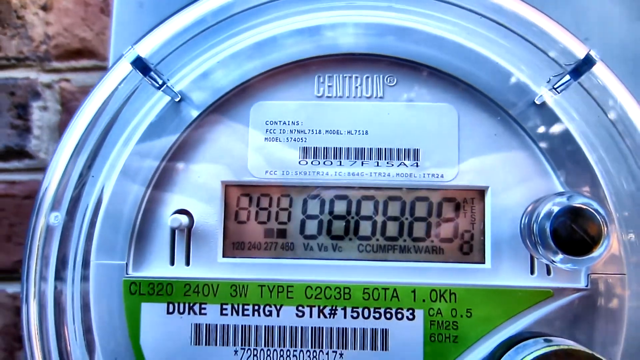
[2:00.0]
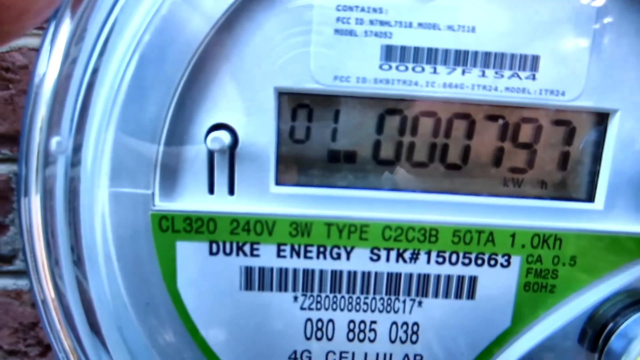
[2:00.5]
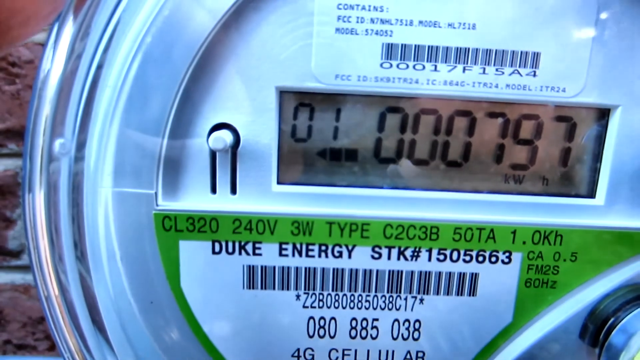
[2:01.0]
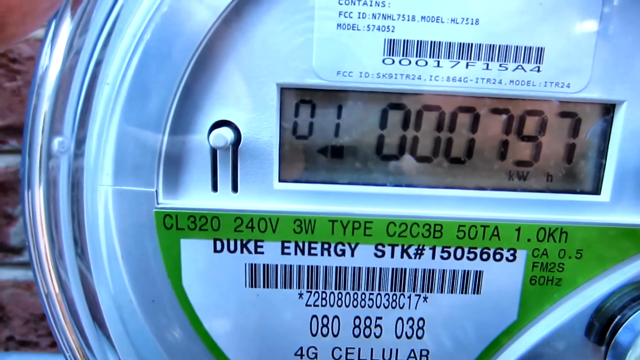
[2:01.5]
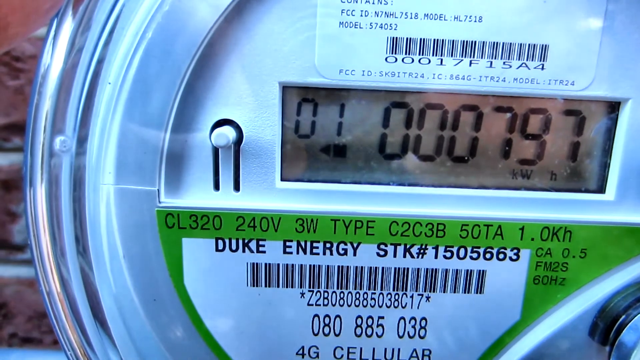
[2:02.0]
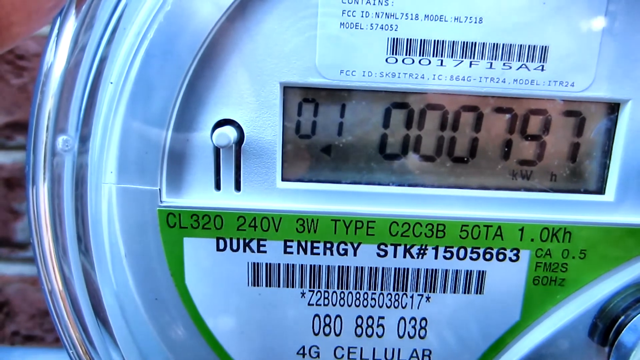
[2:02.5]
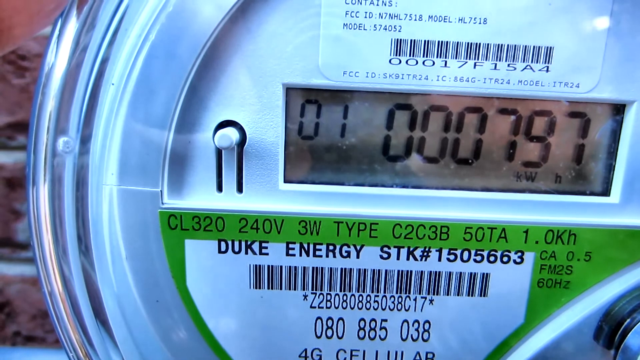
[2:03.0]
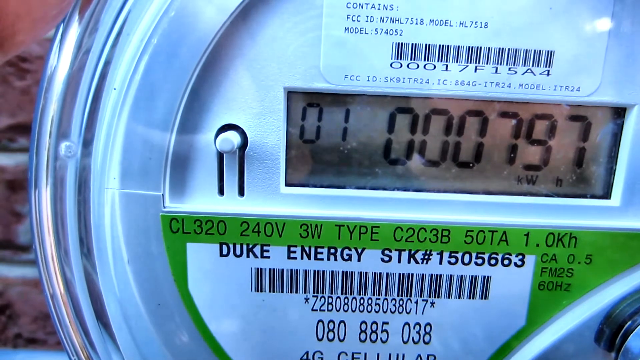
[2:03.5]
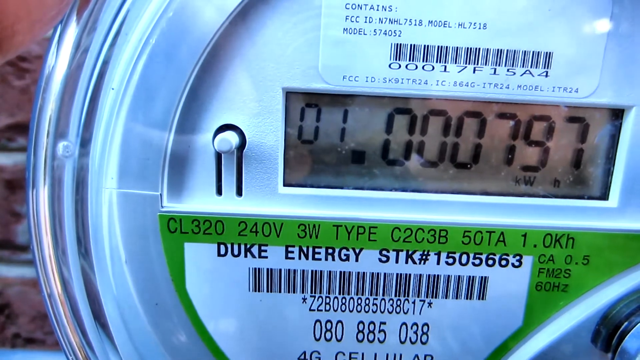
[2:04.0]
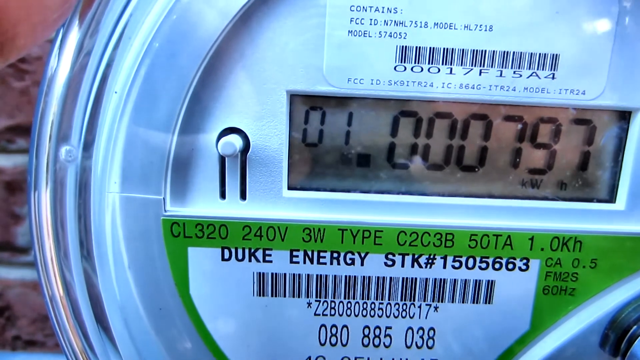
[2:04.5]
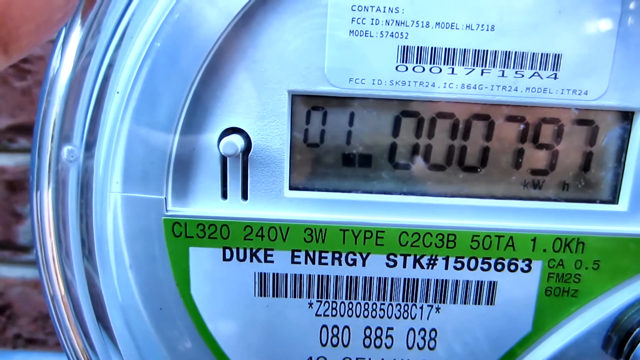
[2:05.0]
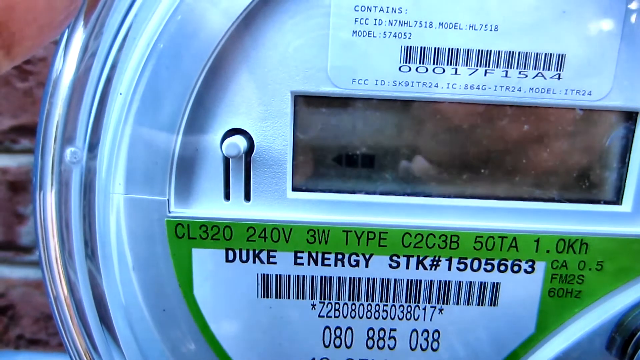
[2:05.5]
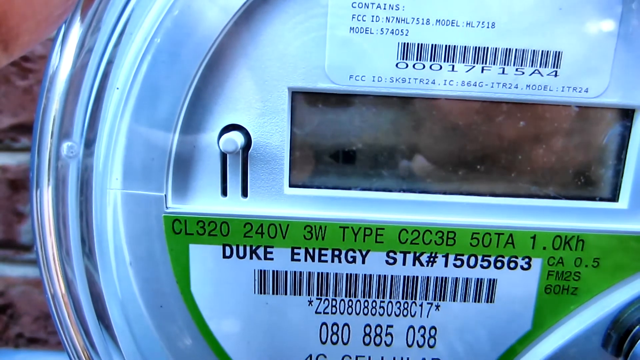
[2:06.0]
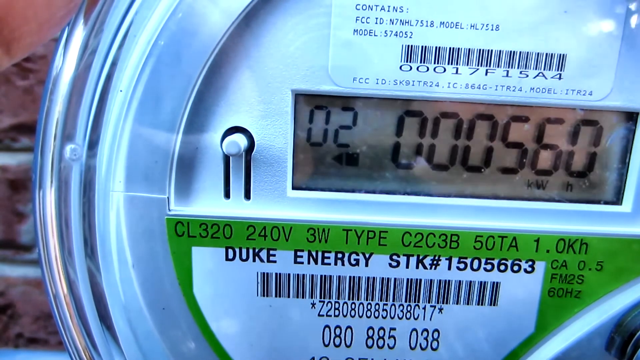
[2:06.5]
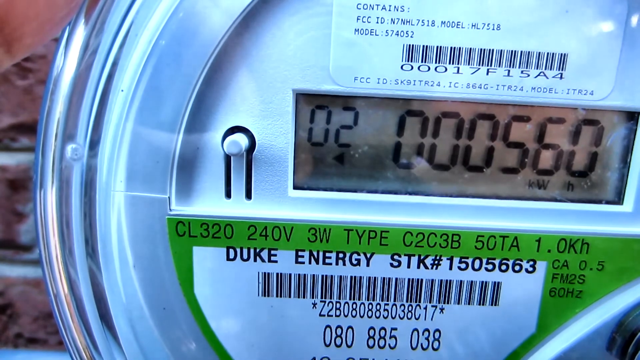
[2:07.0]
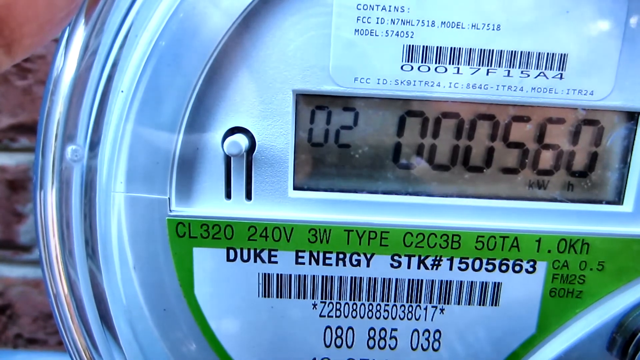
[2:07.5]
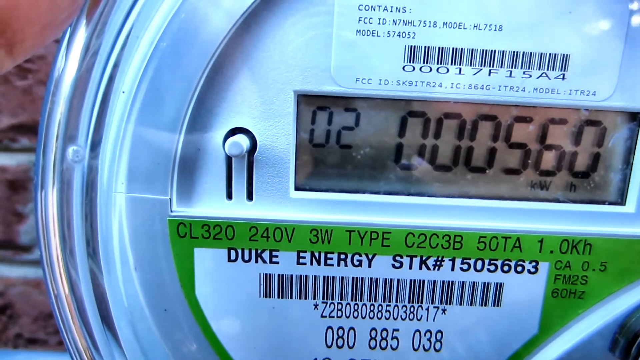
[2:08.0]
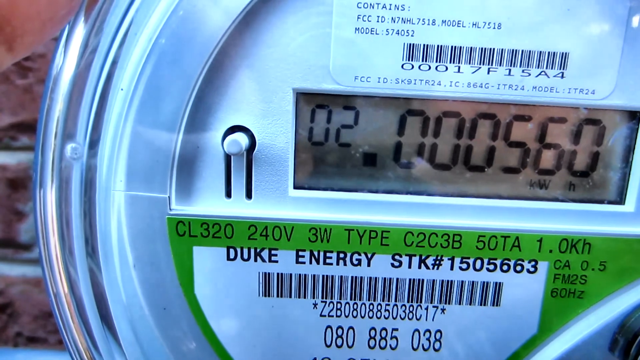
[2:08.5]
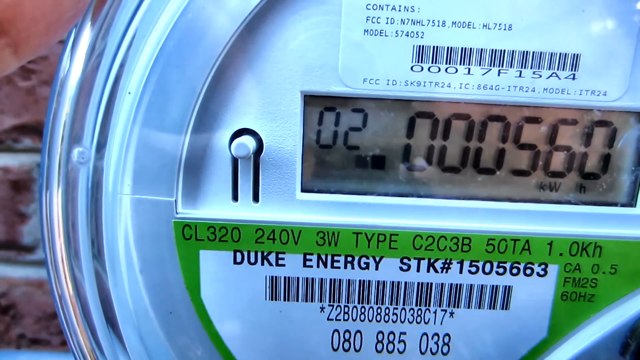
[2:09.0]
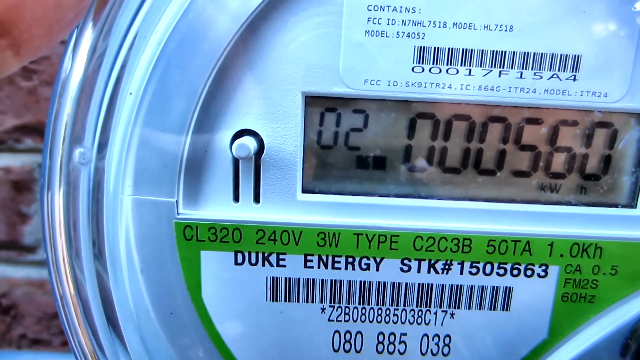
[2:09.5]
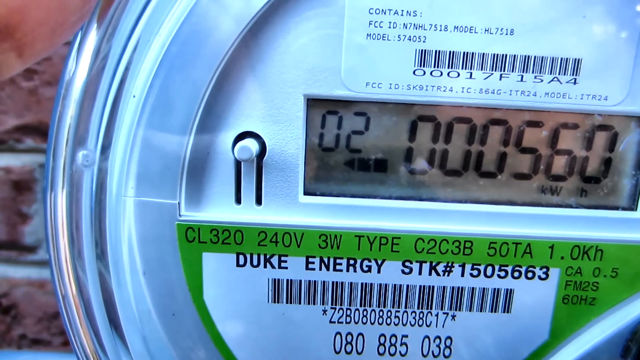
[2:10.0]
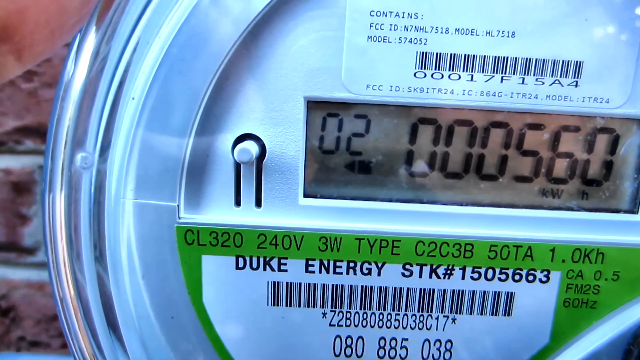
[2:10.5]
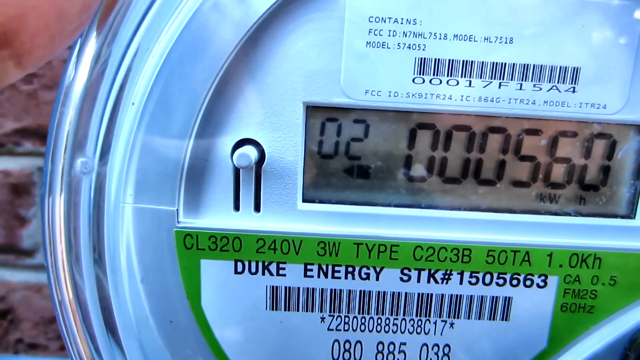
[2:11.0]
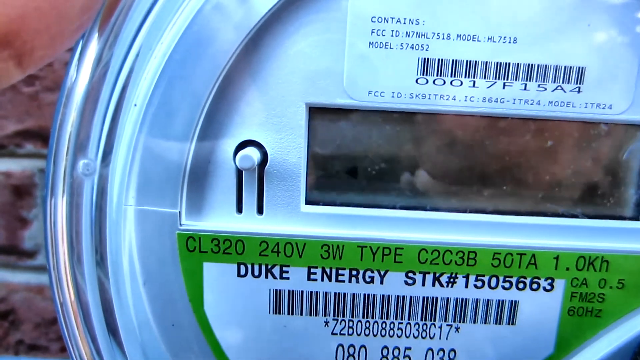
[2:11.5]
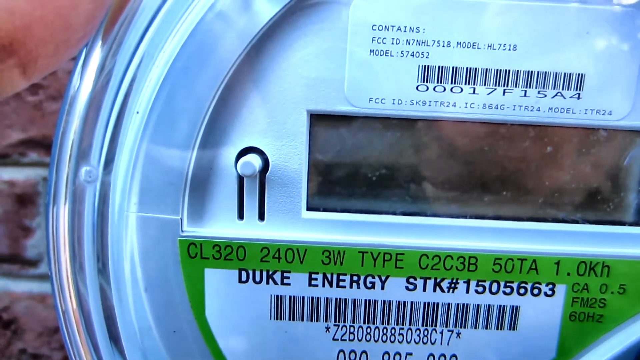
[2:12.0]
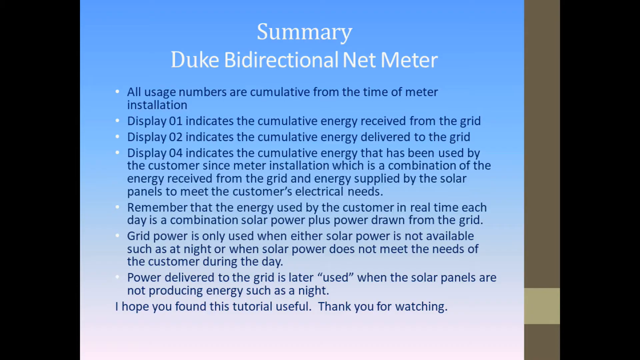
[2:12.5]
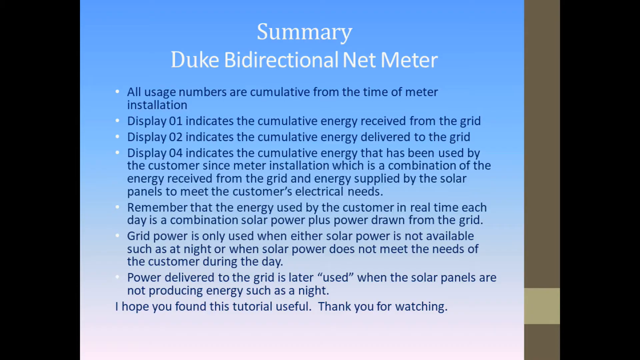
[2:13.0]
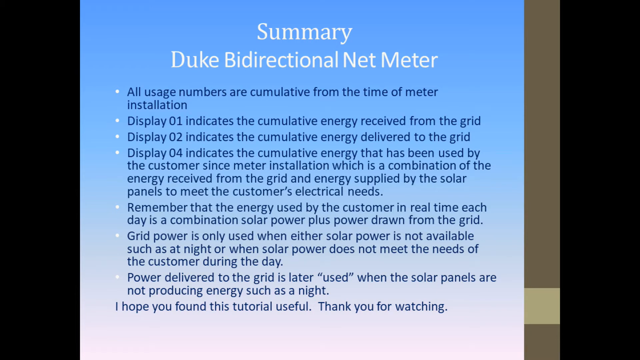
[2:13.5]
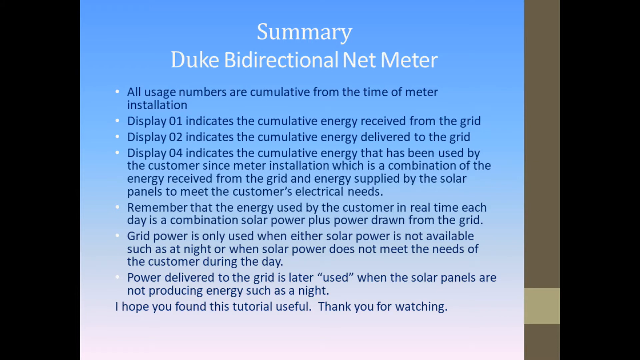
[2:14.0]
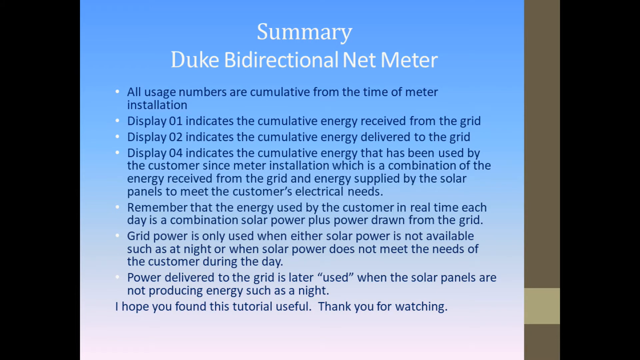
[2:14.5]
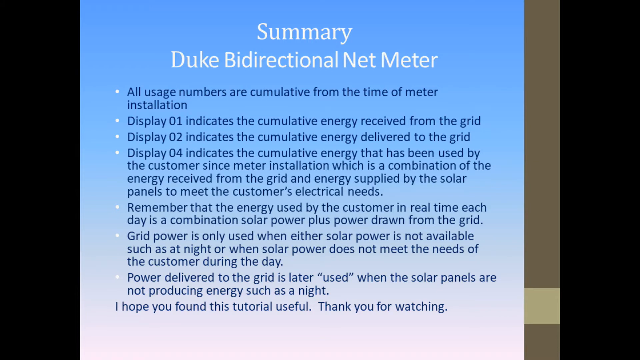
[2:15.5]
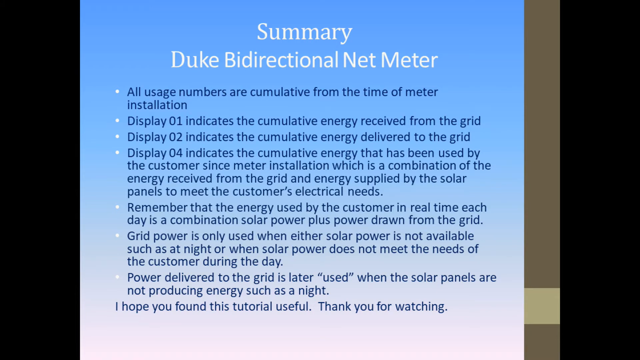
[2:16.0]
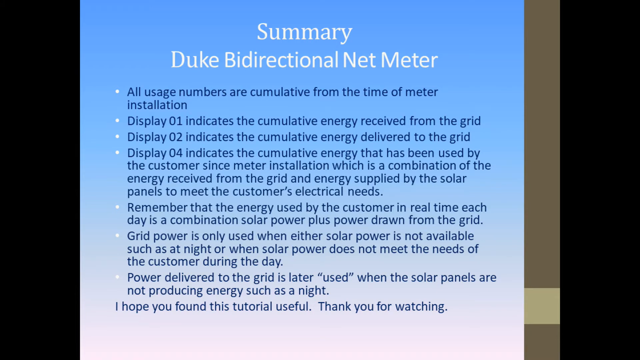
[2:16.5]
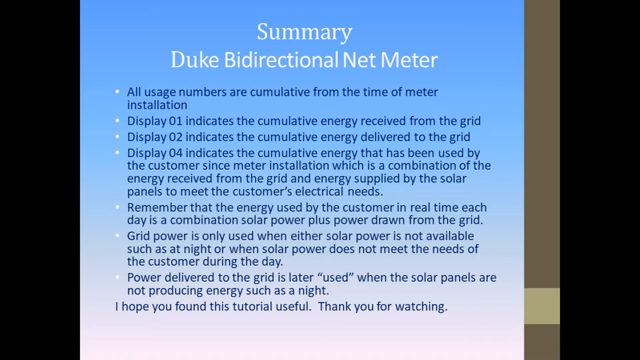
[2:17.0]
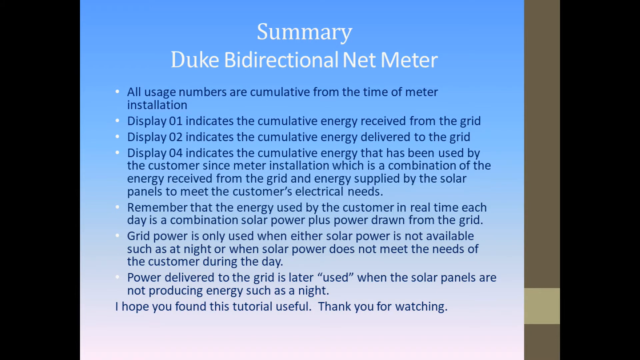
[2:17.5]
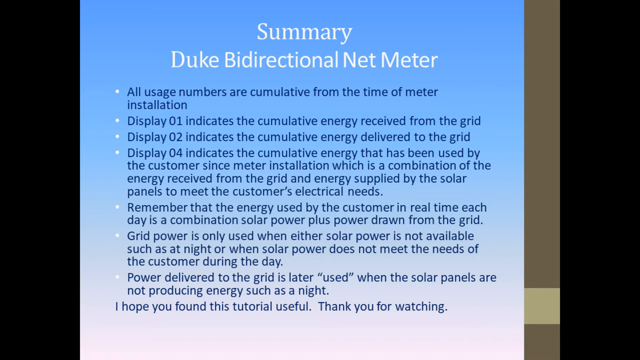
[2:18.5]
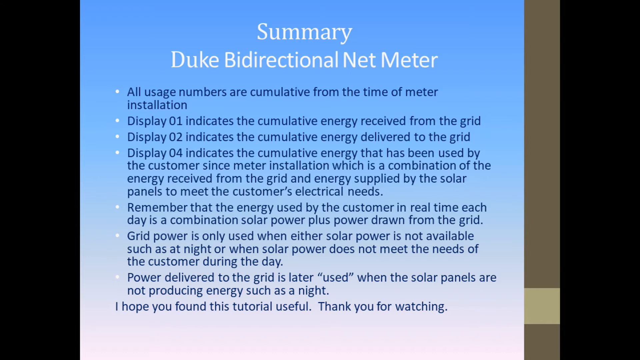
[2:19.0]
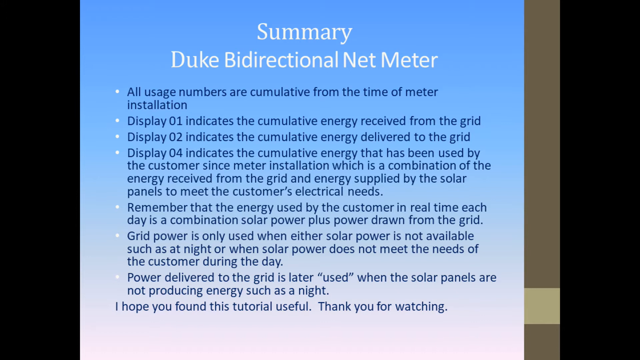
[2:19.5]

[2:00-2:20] The camera focuses right onto the long rectangular reader, which shows strange, electronic-looking letters and numbers like those on a stopwatch. The video then shows a summary reading "Summary" and "Duke bi-directional net meter". Below are bullet points marked with small white dots, with all text in blue: "All usage numbers are cumulative from the time of meter installation"; "Display 01 indicates the cumulative energy received from the grid"; "Display 02 indicates the cumulative energy delivered to the grid"; "Display 04 indicates the cumulative energy that has been used by the customer since meter installation, which is a combination of the energy received from the grid and energy supplied by the solar panels to meet the customer's electrical needs"; "Remember that the energy used by the customer in real time each day is a combination of solar power plus power drawn from the grid"; "Grid power is only used when either solar power is not available, such as at night or when solar power does not meet the needs of the customer during the day"; and the final bullet, "Power delivered to the grid is later 'used' when the solar panels are not producing energy such as at night", with "used" in quotation marks. Underneath it says "I hope you found this tutorial useful. Thank you for watching."